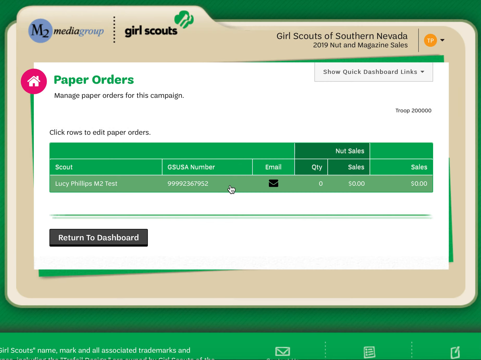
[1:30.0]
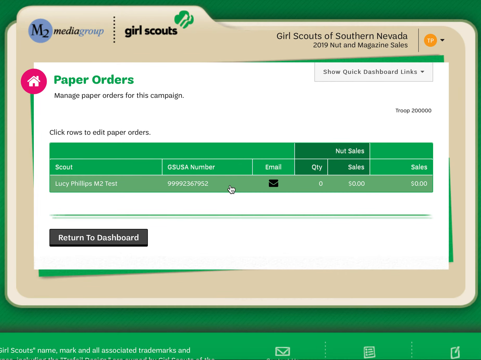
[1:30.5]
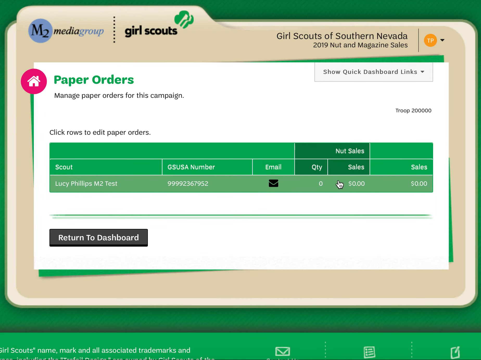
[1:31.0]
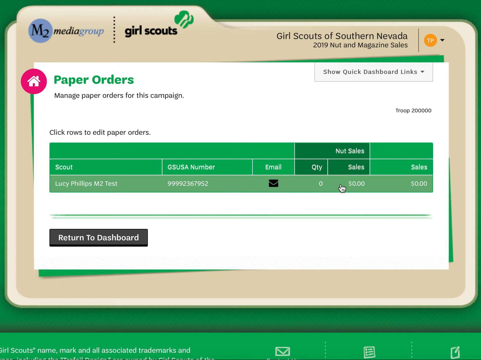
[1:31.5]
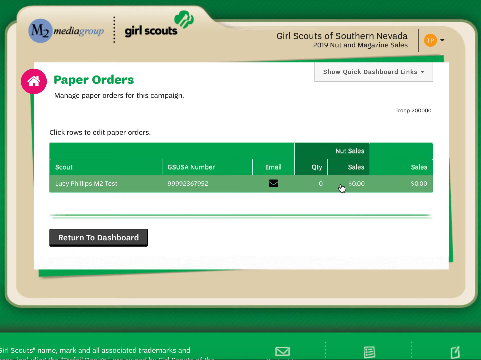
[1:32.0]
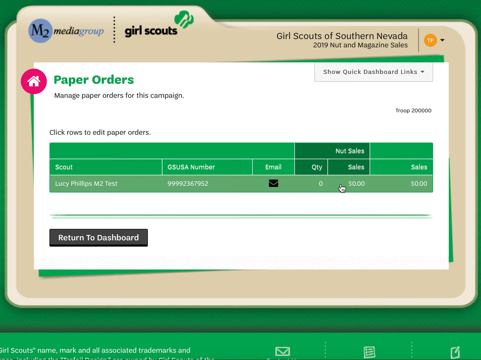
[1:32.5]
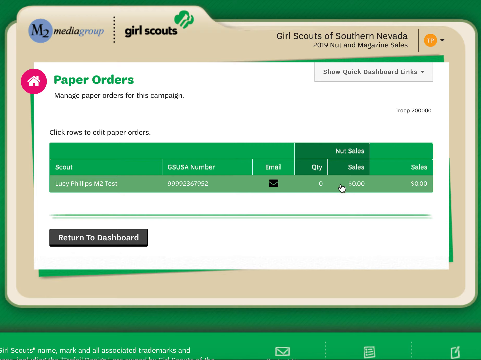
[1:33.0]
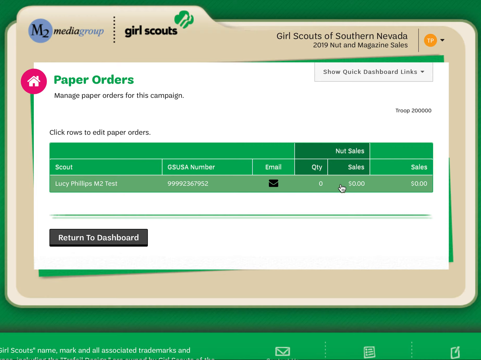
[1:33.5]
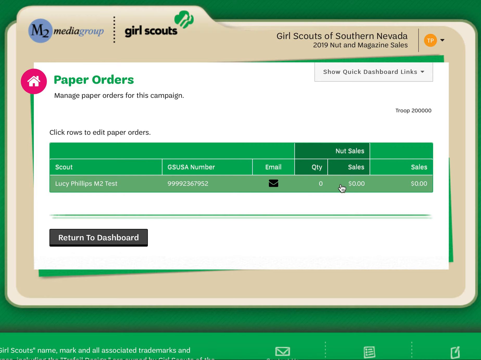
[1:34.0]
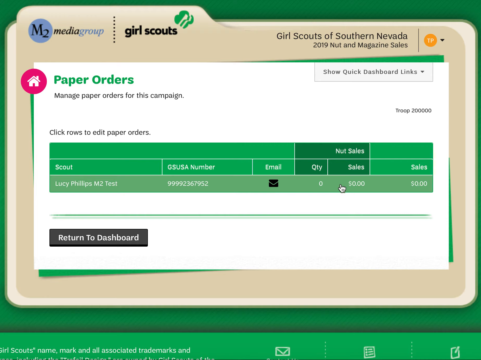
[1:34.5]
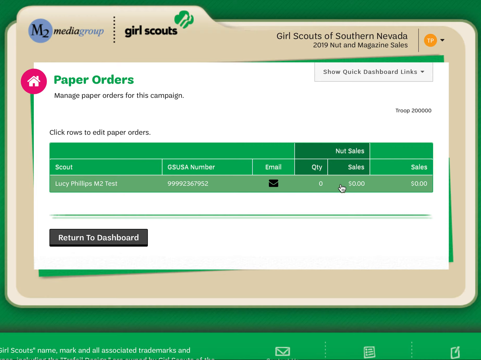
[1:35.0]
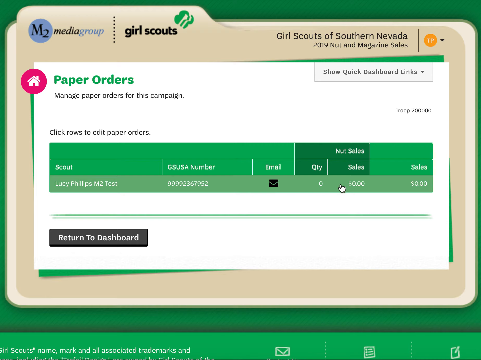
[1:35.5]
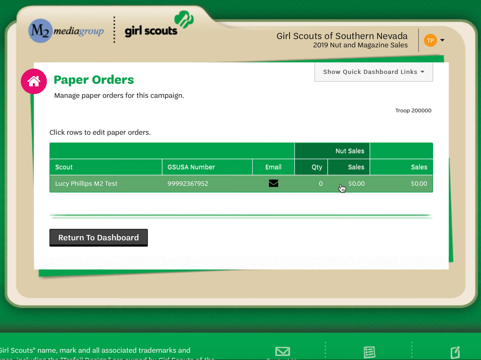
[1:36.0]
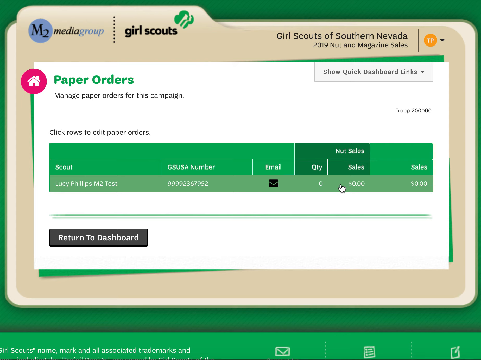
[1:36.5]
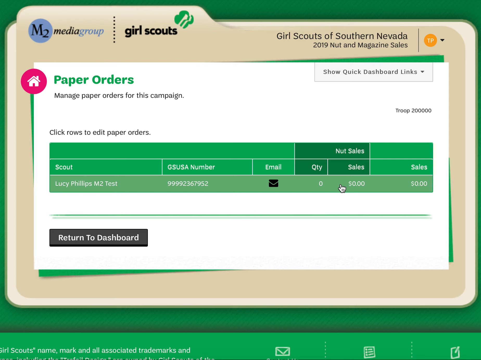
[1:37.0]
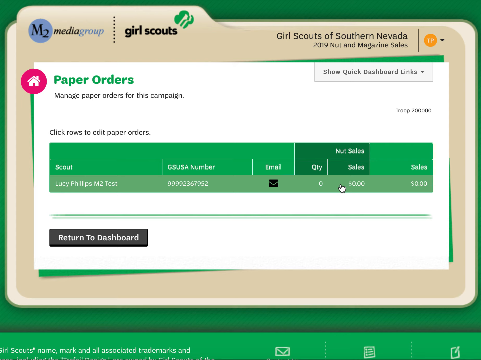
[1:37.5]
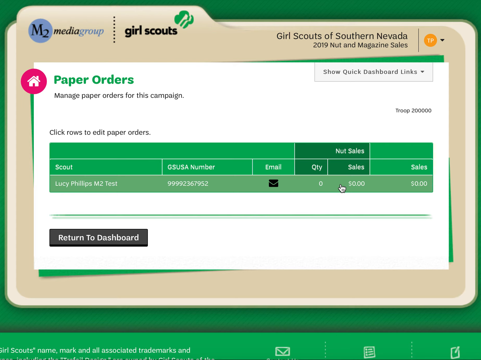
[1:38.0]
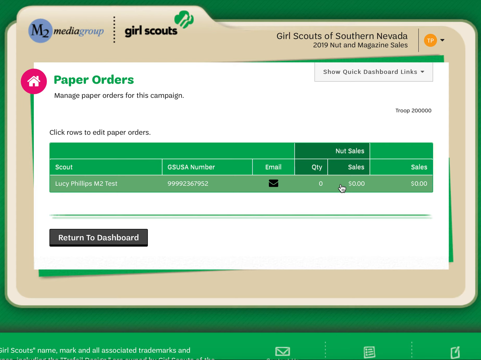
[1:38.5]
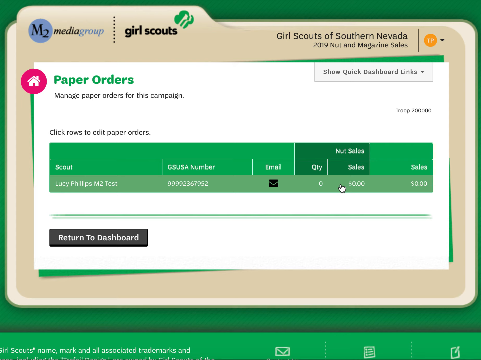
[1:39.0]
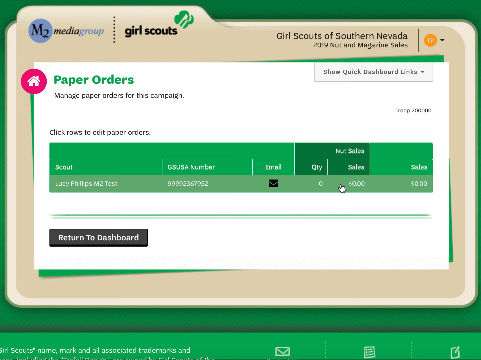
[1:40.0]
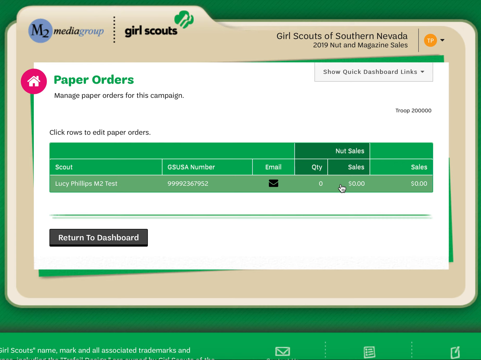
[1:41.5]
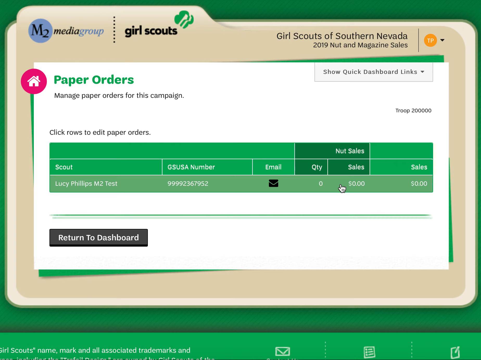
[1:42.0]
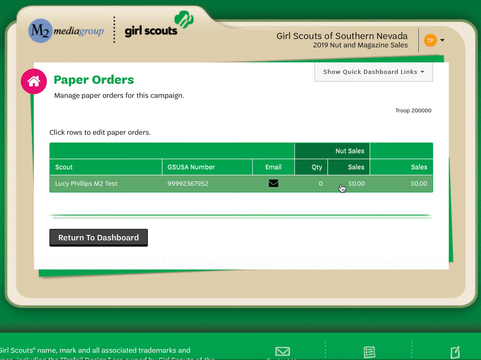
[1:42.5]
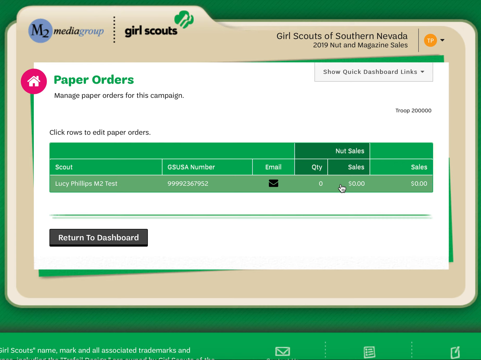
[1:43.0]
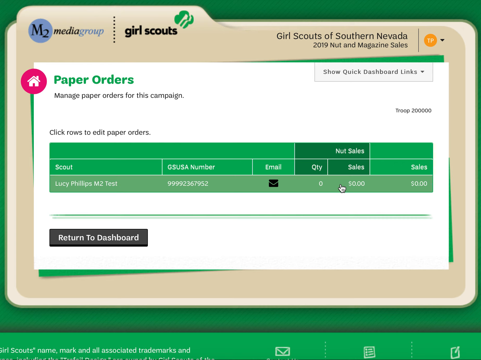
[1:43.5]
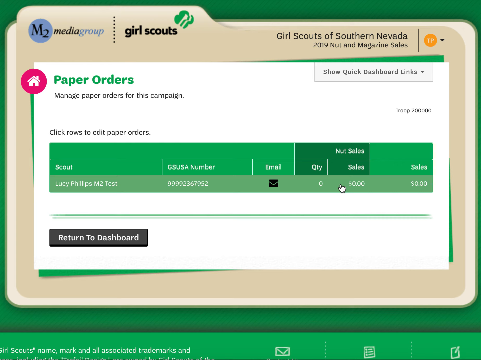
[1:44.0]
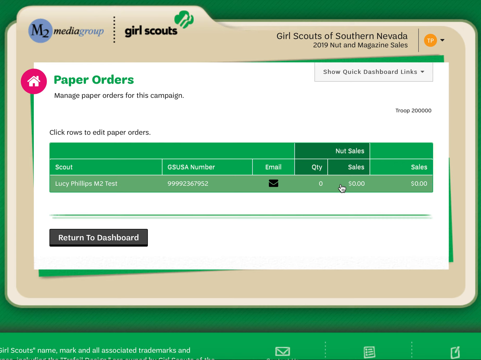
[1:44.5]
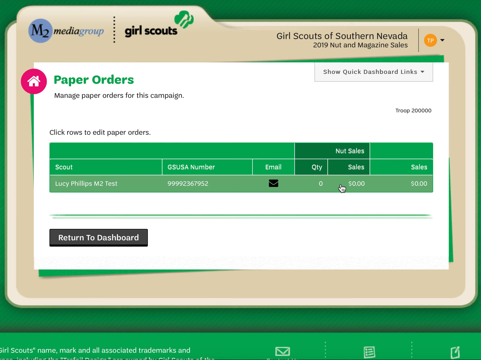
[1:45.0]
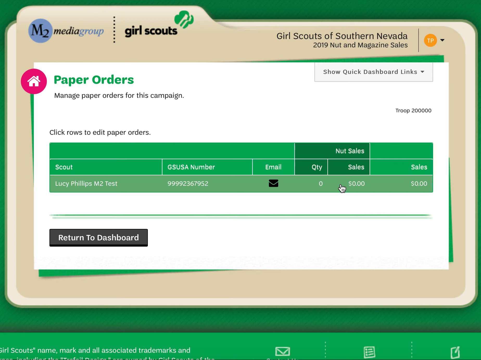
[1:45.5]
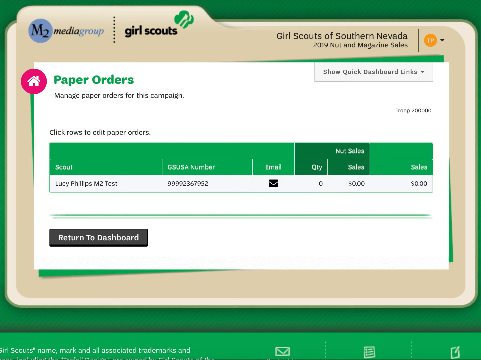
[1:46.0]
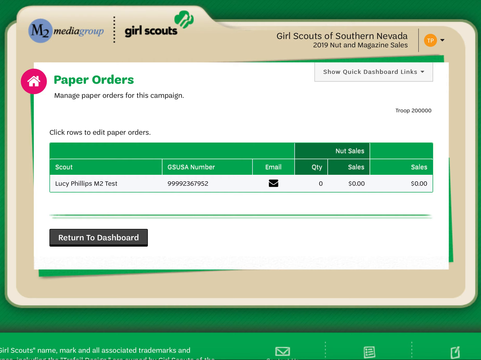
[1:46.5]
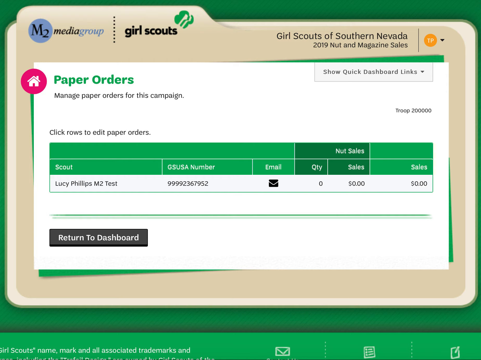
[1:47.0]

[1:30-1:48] The mouse moves slightly to the right. The page is still on paper orders, with text all over the screen. In the top left are the same logos seen since the start of the video, M2 Media Group and Girl Scouts. The top right reads "Girl Scouts of Nevada 2019 nut and magazine sales". "Paper orders" is below the logos in the top left, and another table is in the middle center. In the very bottom left is a small black button reading "return to dashboard". This appears to be a computer screen, and the very background is an image of a folder with green behind it. The primary colours are white, green, light green and dark green, and it appears to be a Girl Scout website. The mouse moves from the middle of the screen slightly to the right and hovers over a tab, then stays in that position without moving.